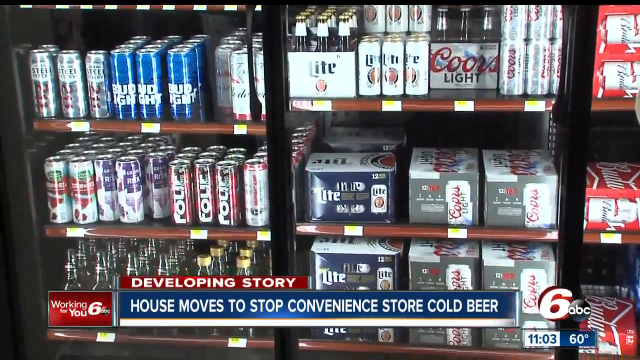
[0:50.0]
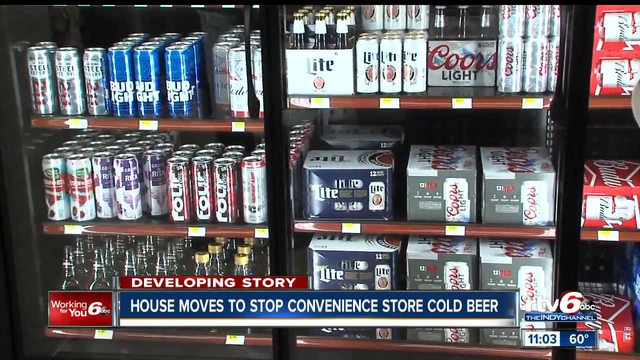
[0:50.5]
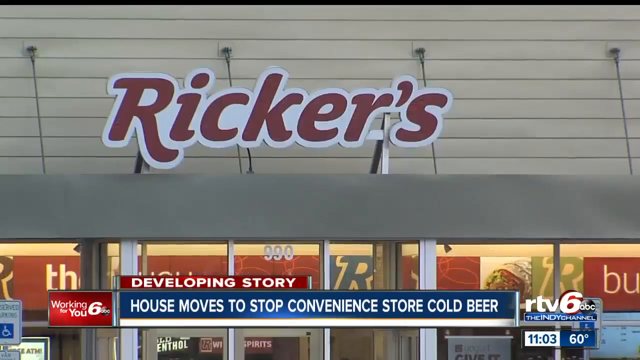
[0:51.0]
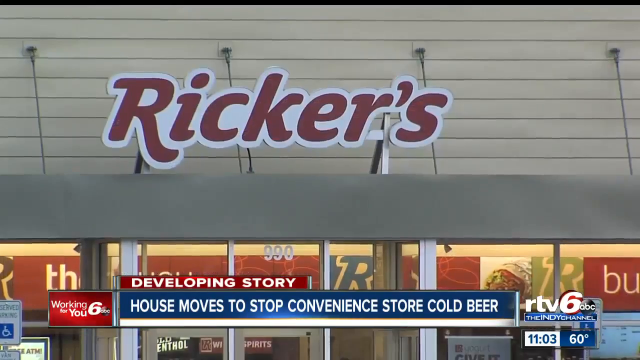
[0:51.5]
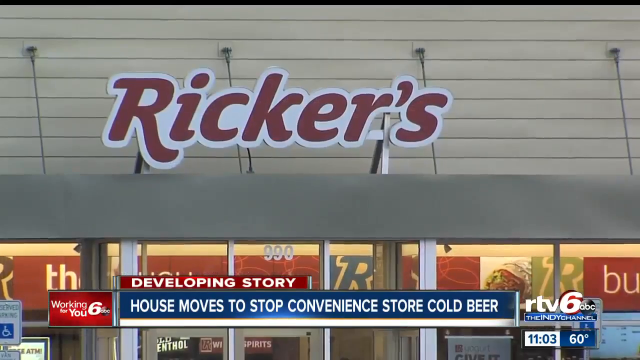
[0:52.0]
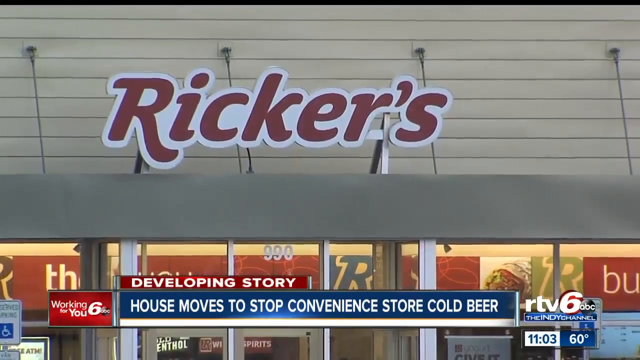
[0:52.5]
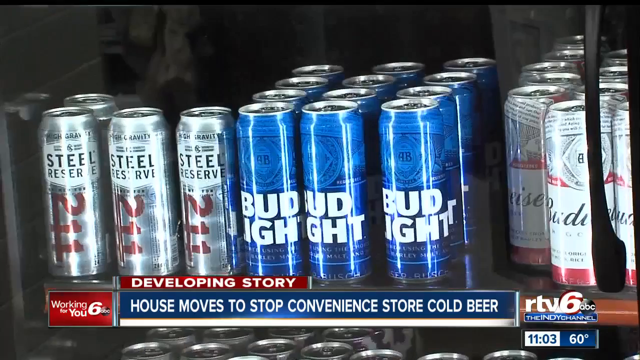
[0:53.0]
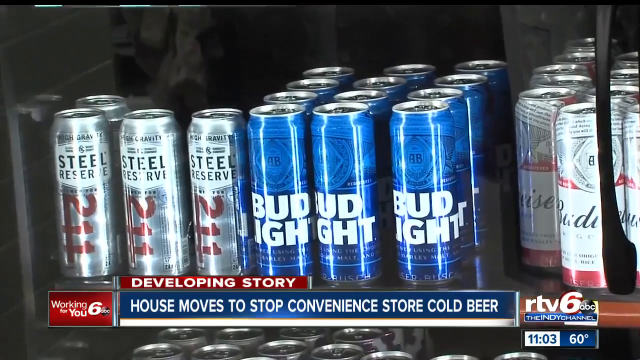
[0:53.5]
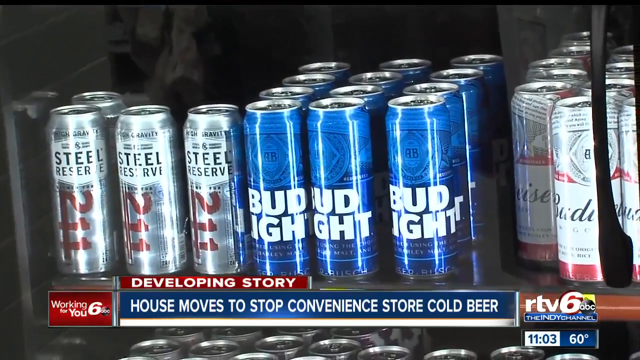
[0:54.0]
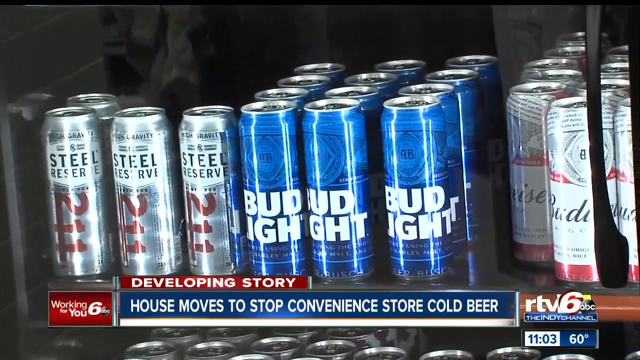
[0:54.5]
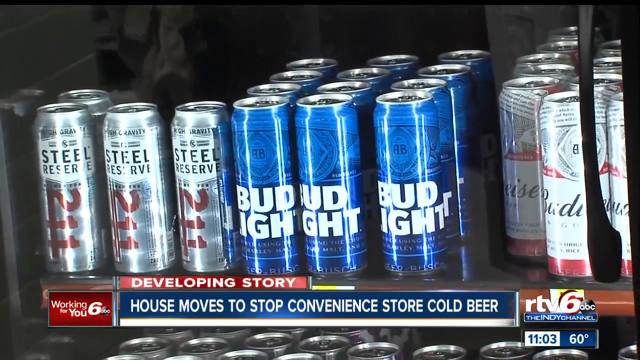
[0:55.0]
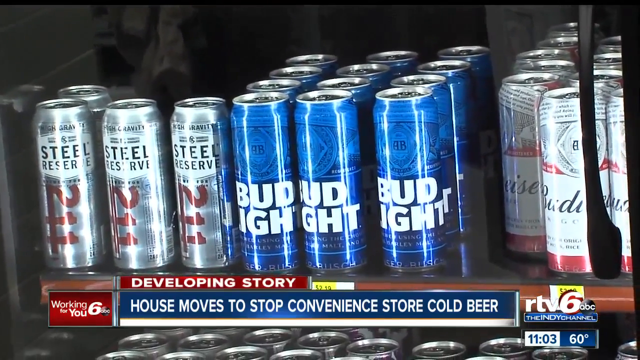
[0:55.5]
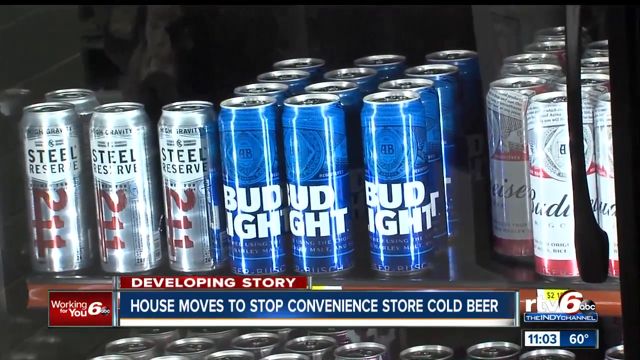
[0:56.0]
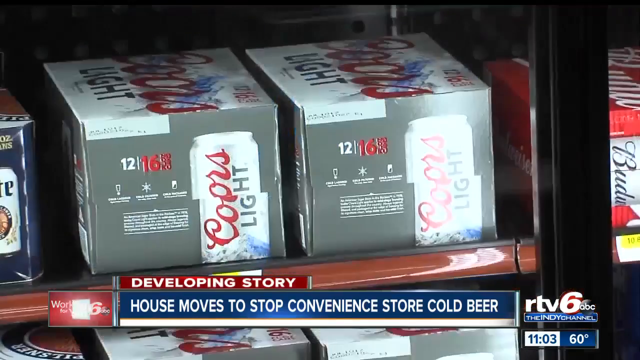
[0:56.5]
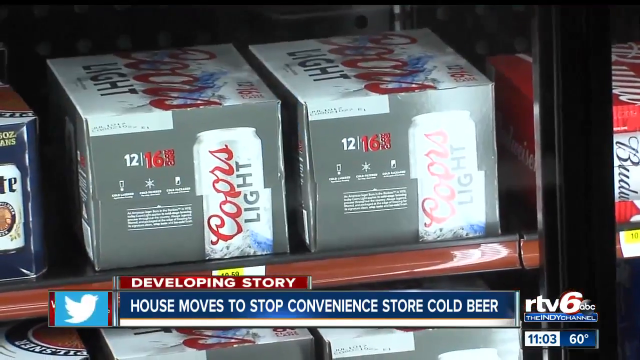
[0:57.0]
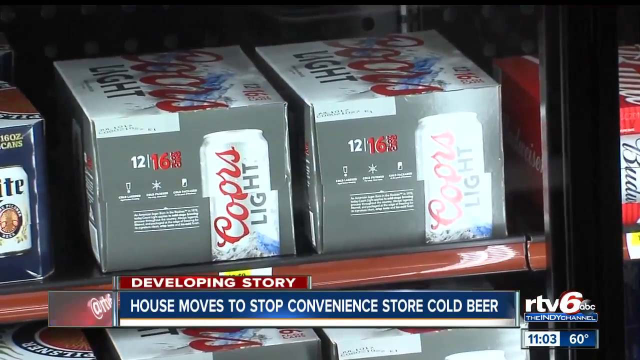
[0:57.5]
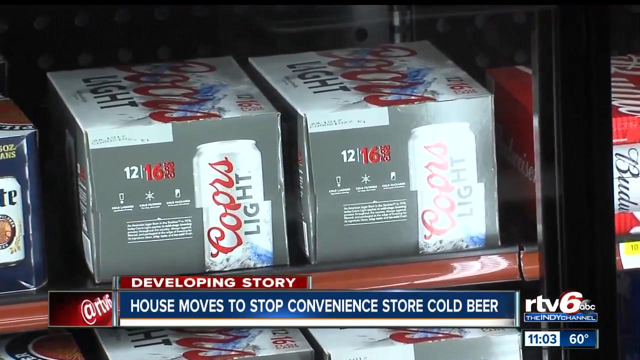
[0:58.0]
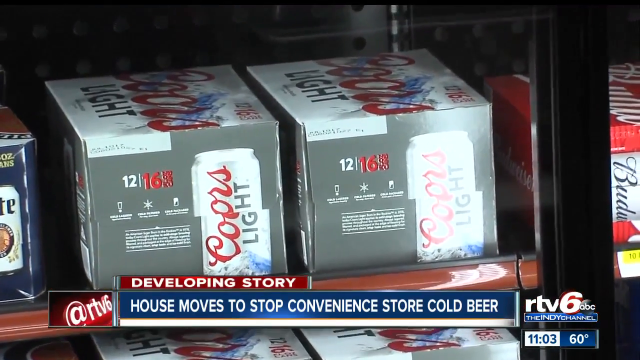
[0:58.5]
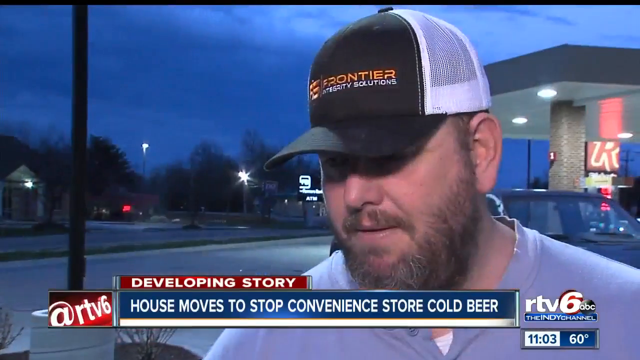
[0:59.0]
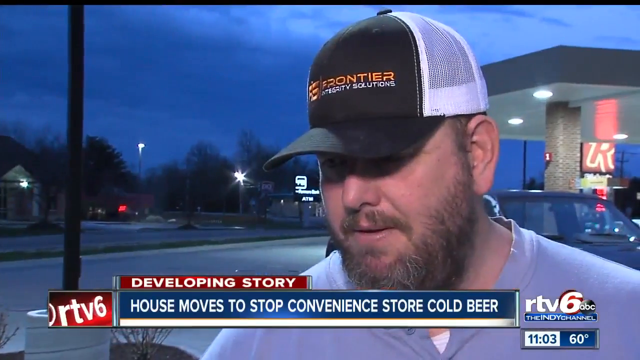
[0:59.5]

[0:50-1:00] A collection of different types of beer is shown: some in cans, some in bottles and some packaged. A clearer view of the Rikers sign, written in maroon and white, appears. Steel Reserve and Bud beers are visible, in gray and blue. The headline reads "developing story" and mentions the house and a convenience store. The live news podcast continues.